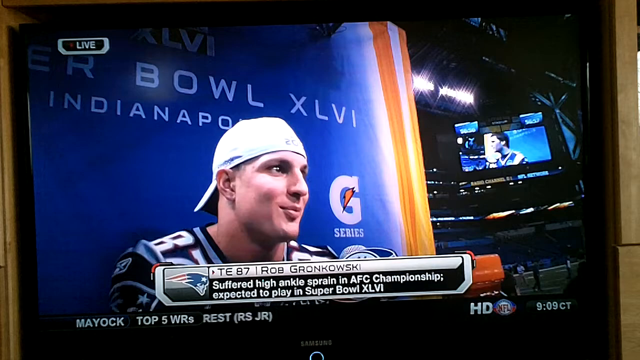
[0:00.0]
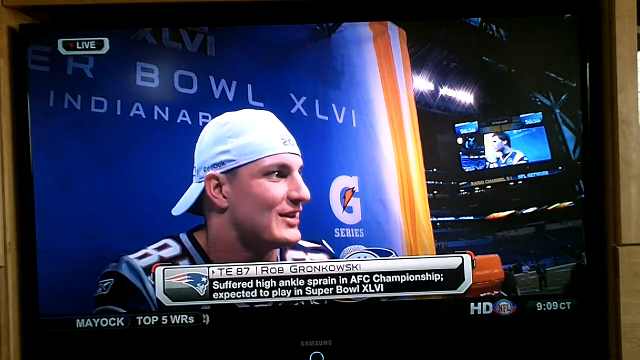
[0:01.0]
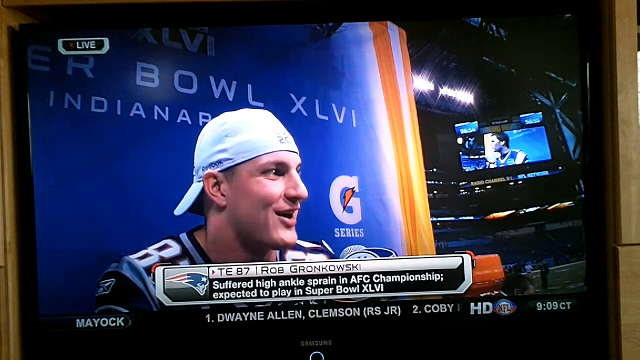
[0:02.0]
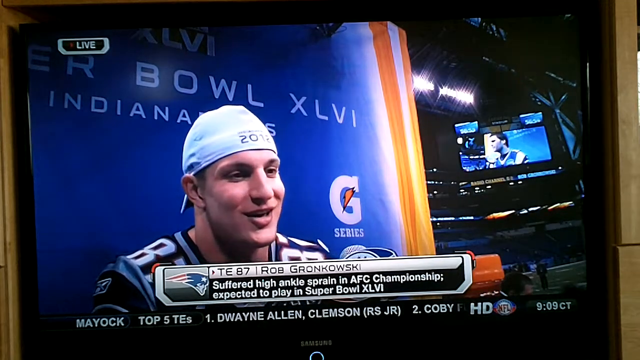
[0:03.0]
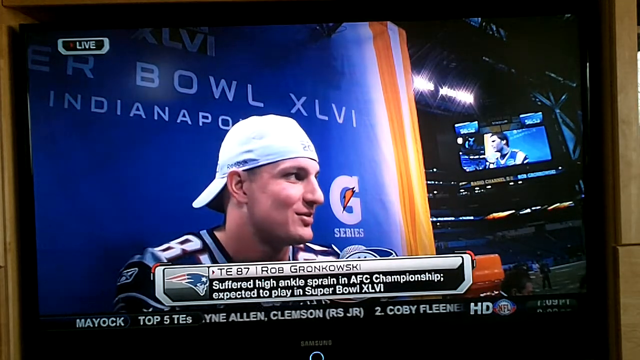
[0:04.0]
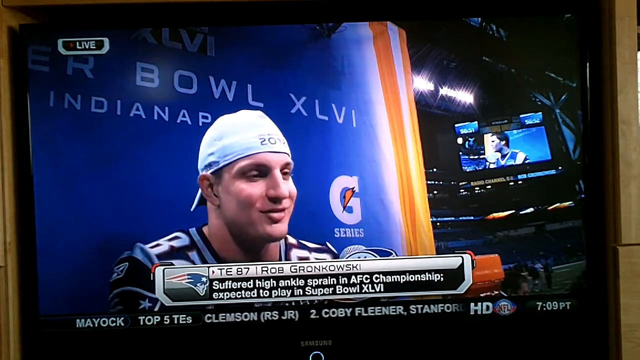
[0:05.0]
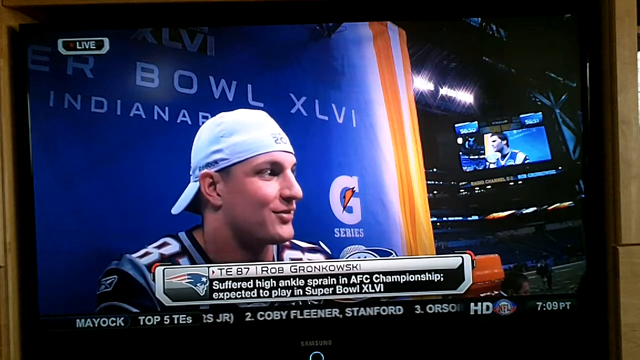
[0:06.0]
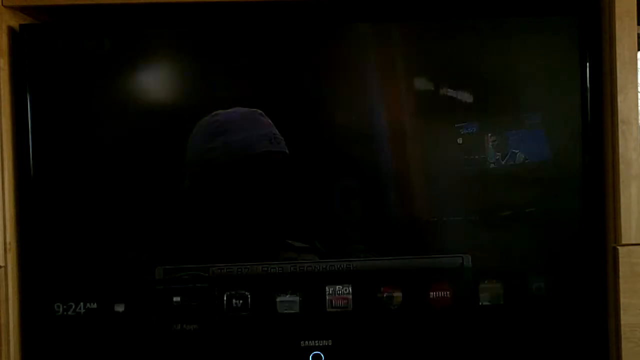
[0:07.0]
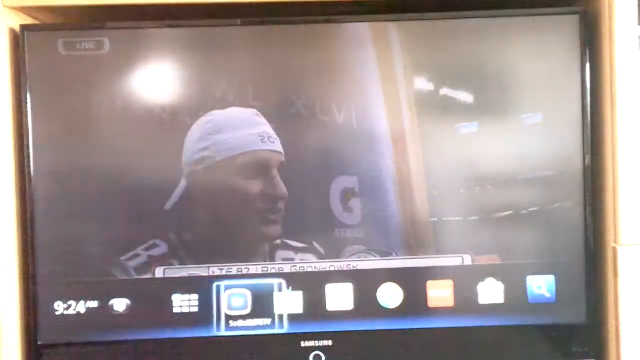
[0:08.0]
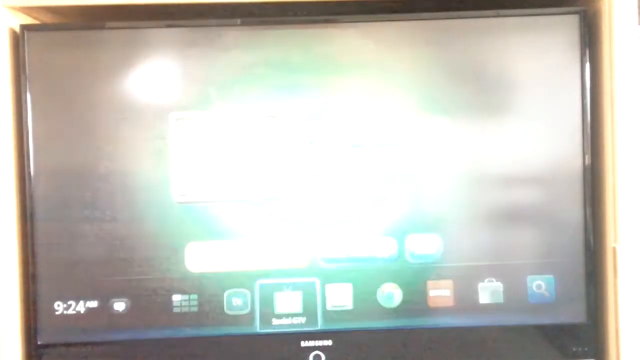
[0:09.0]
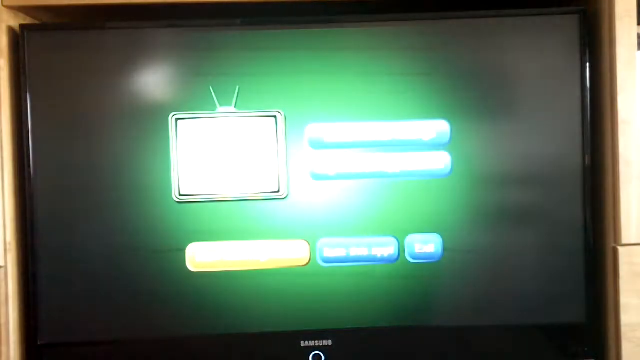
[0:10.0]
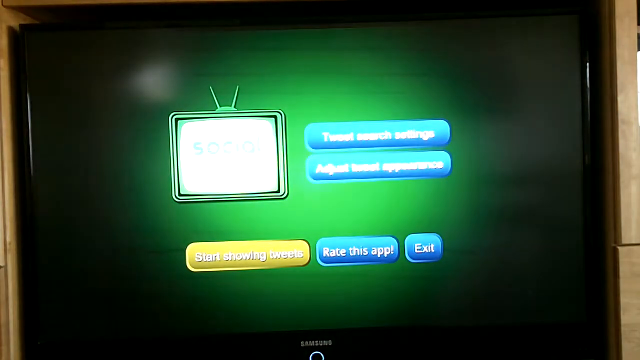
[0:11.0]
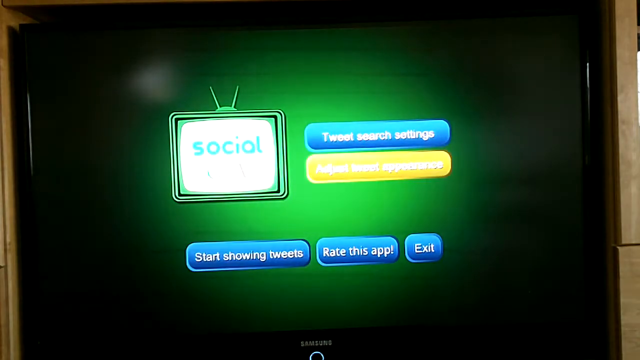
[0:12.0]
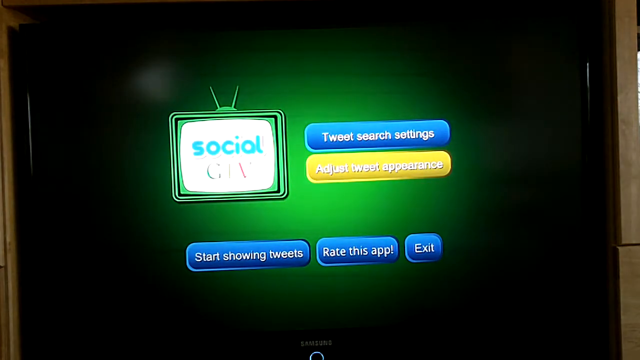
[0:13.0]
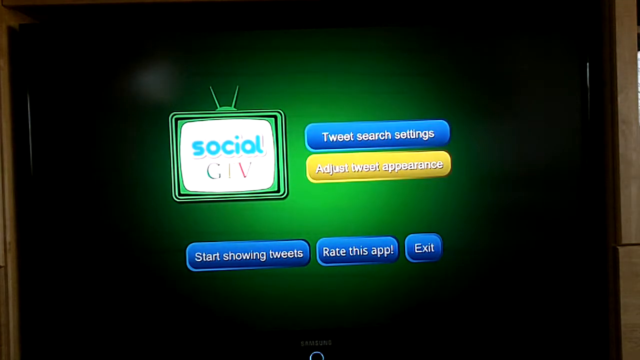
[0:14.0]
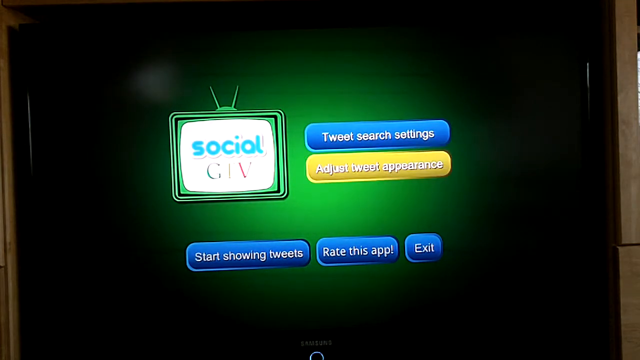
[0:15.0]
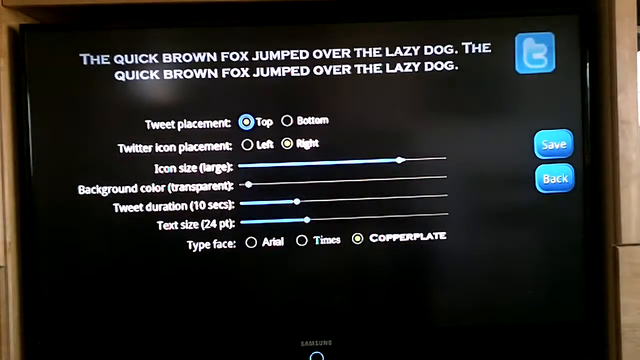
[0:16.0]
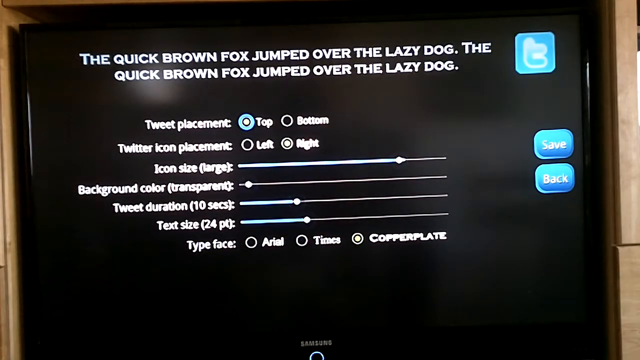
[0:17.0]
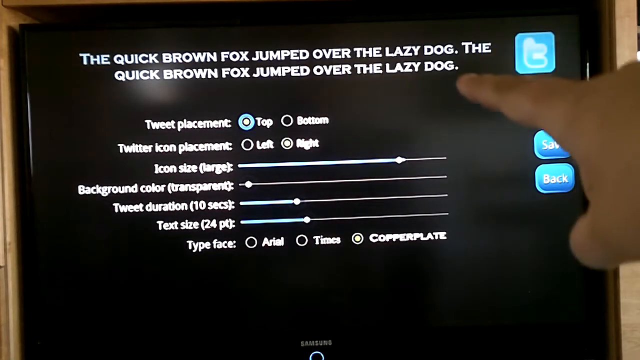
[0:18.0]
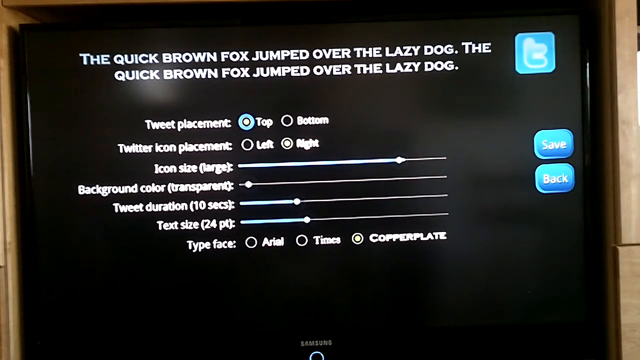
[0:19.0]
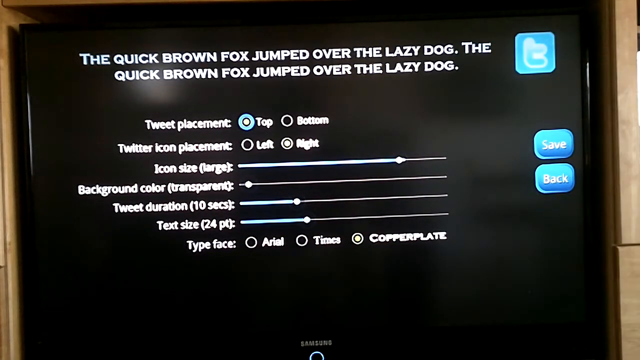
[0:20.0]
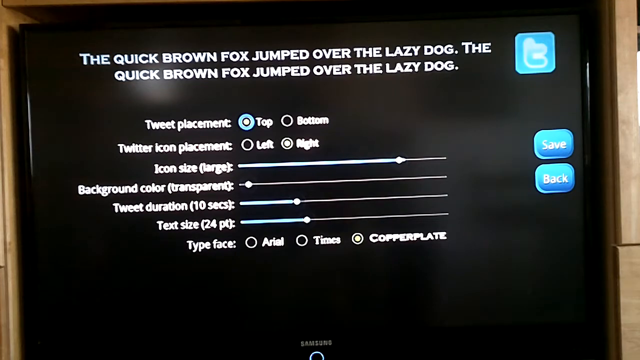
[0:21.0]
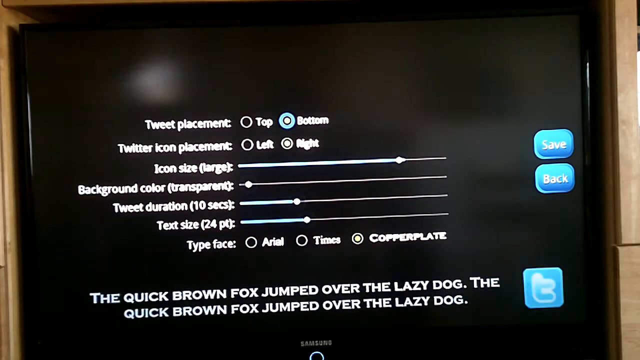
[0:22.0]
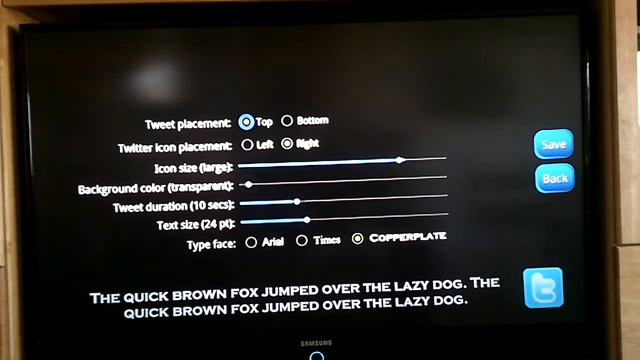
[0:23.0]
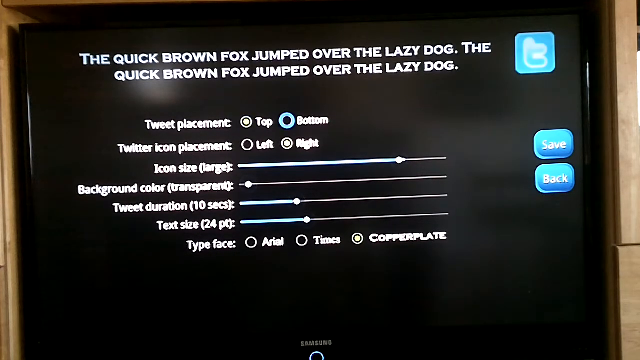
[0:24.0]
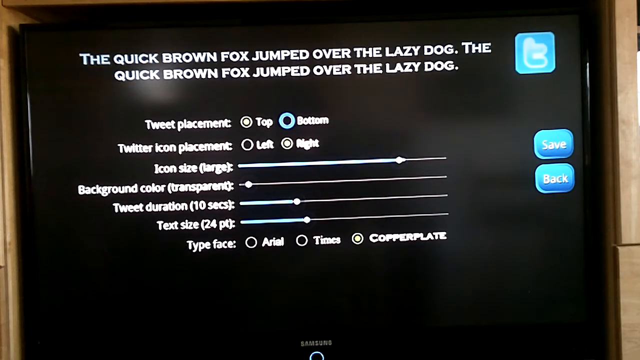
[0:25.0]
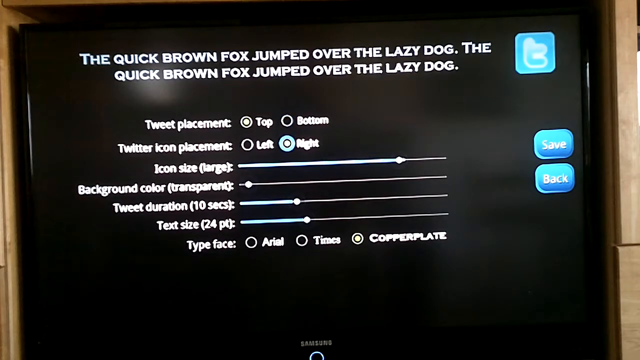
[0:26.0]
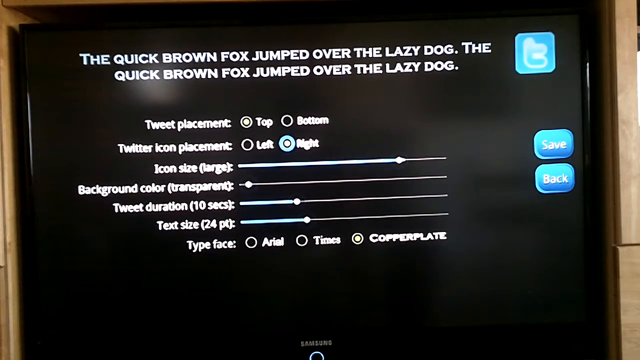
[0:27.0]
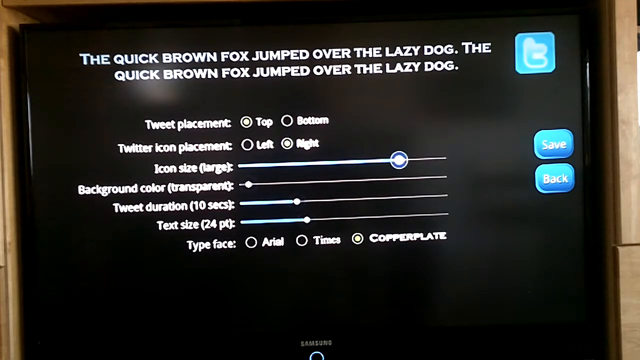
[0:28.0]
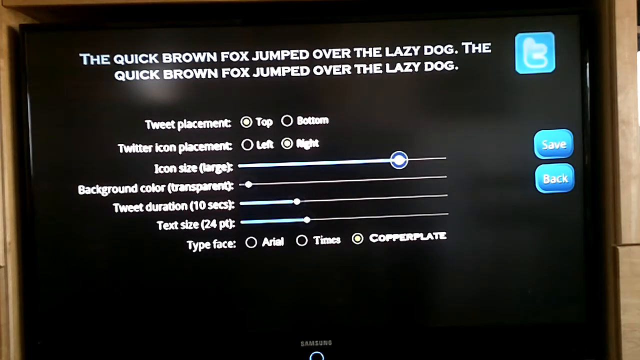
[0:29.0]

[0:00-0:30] The video opens on what appears to be computer-generated imagery. On the right side of the screen, up on the ceiling, there is a scoreboard that does not look real and seems computer generated. On the left side of the screen is a ball player wearing a jersey and a baseball cap on backwards; it is white. He also does not look real and appears CGI generated. At the bottom of the screen is a banner with a Patriots logo on its left. The rest of the banner reads "TE 87" followed by the name "Rob GRONKOWSKI". Also in the banner, in white text, it says "suffered high ankle sprain in AFC Championship. Expected to play in Super Bowl XLVI." As the player starts speaking and his head turns, he looks more real; possibly the low resolution is what makes him look artificial.